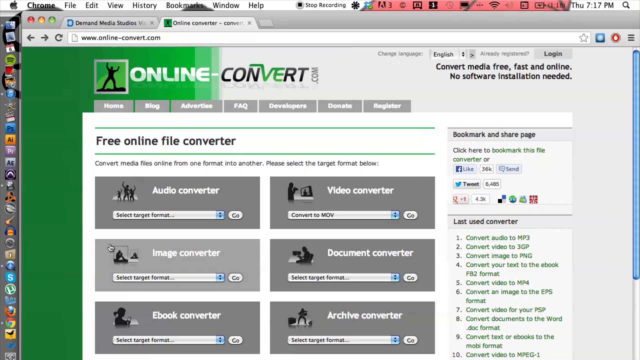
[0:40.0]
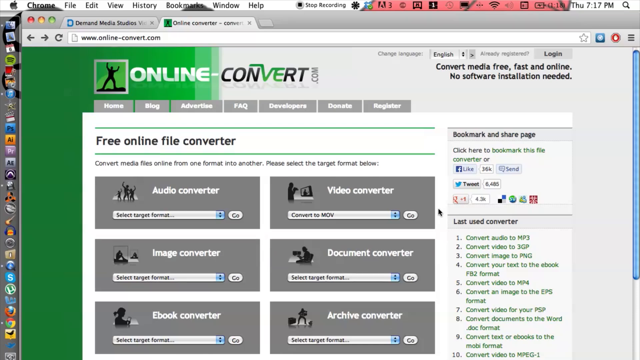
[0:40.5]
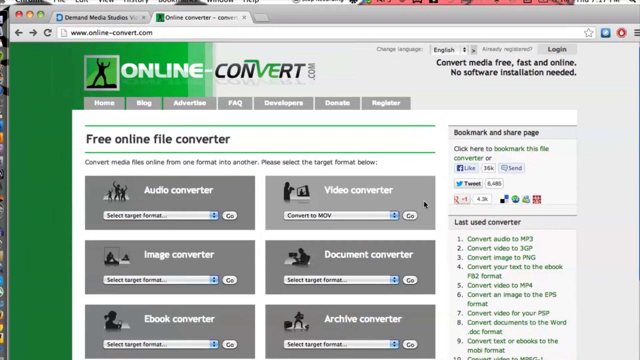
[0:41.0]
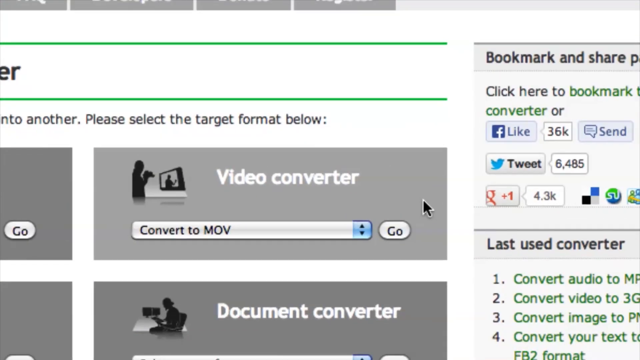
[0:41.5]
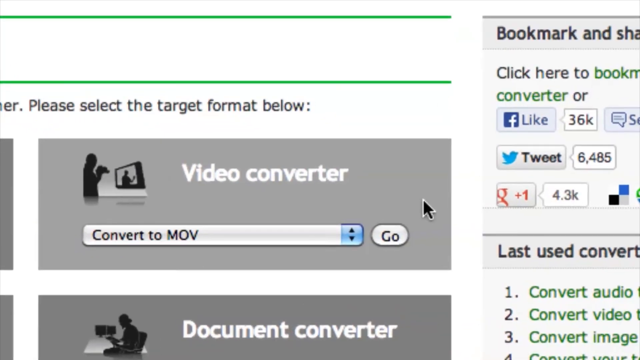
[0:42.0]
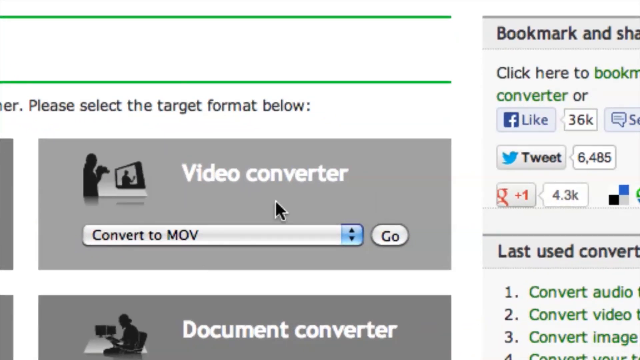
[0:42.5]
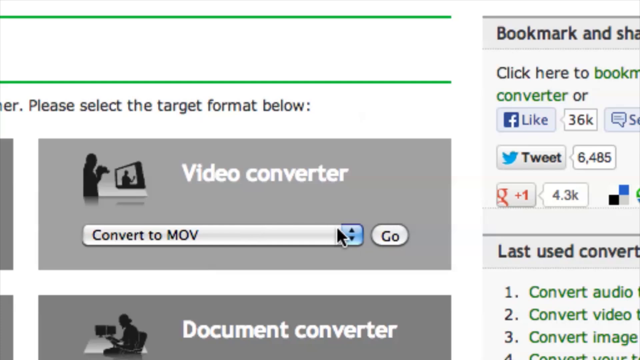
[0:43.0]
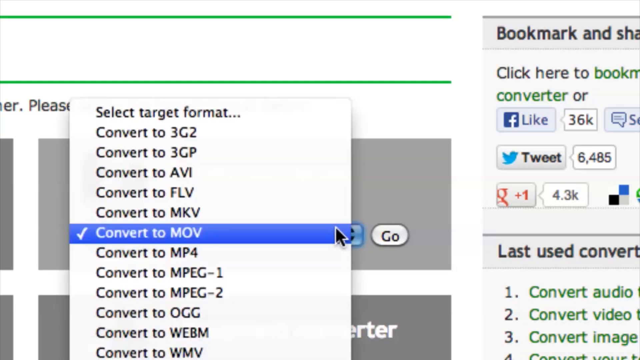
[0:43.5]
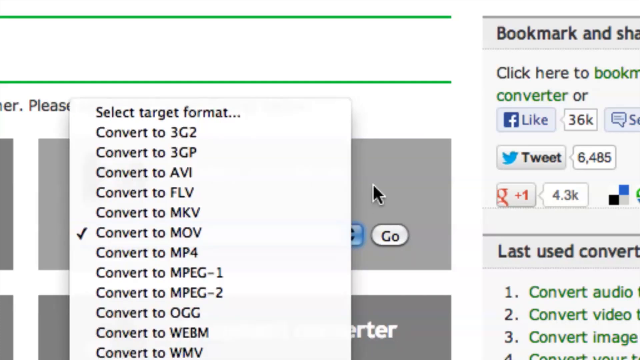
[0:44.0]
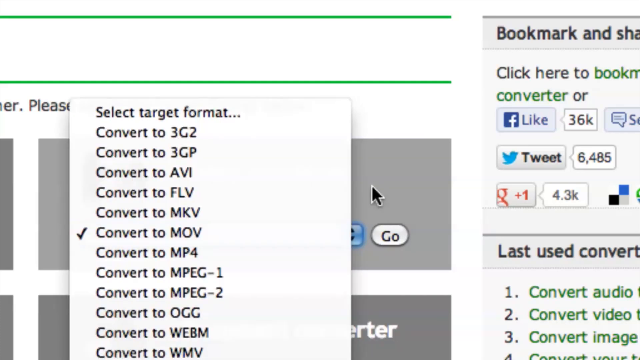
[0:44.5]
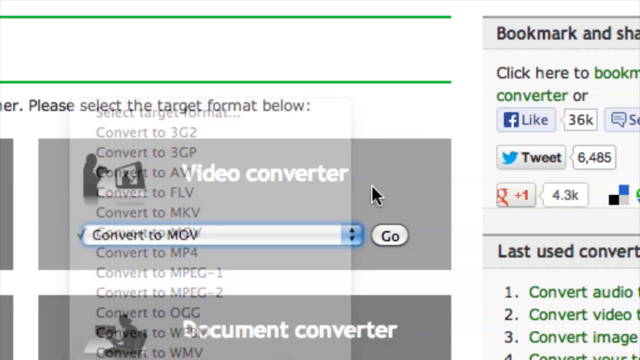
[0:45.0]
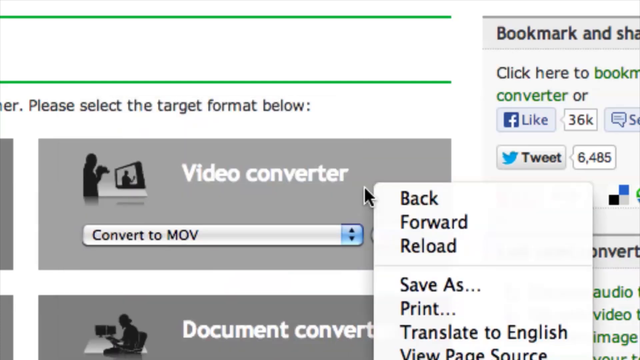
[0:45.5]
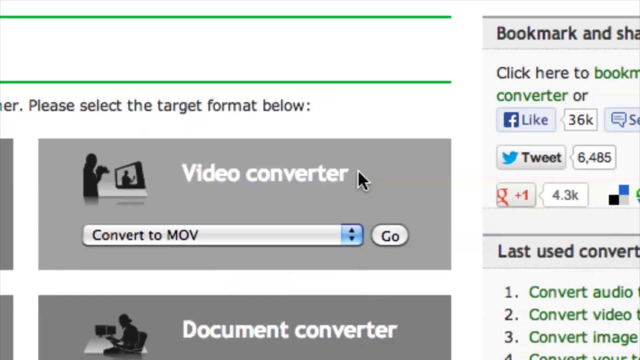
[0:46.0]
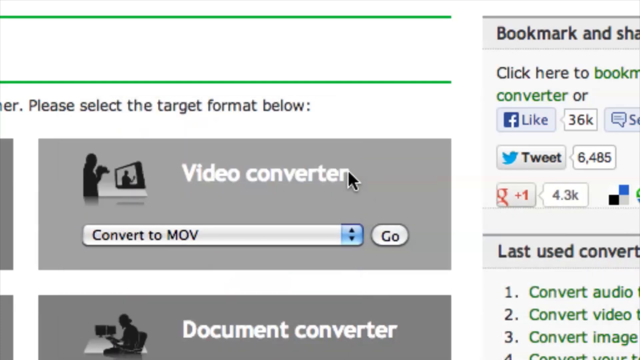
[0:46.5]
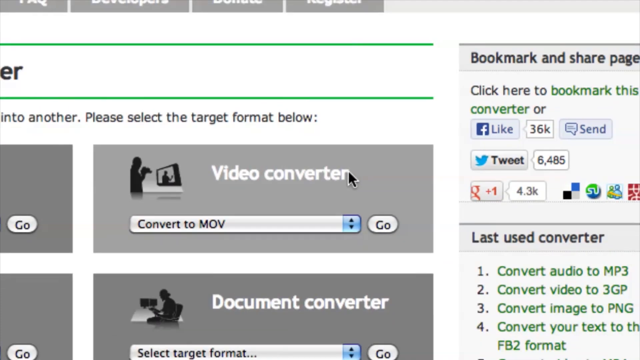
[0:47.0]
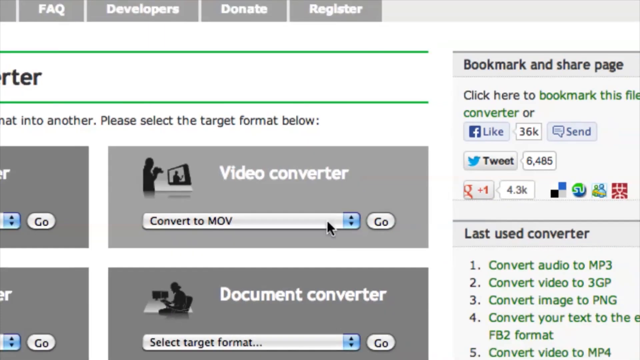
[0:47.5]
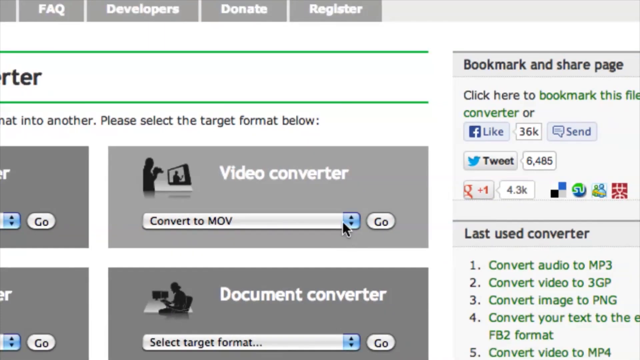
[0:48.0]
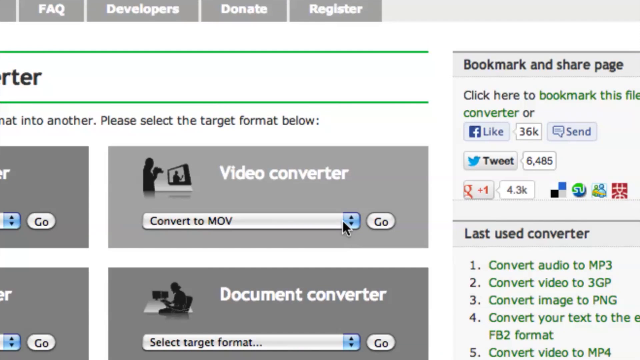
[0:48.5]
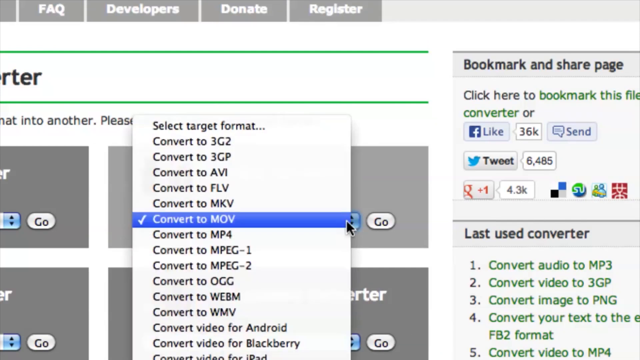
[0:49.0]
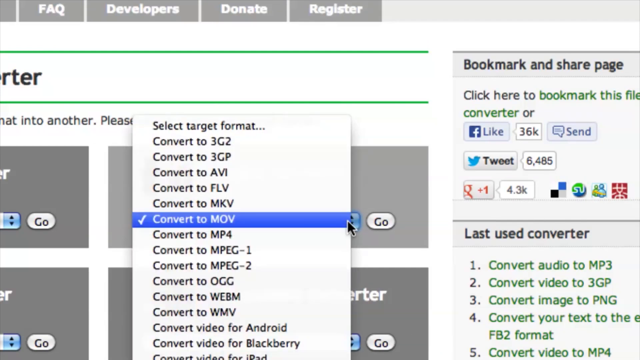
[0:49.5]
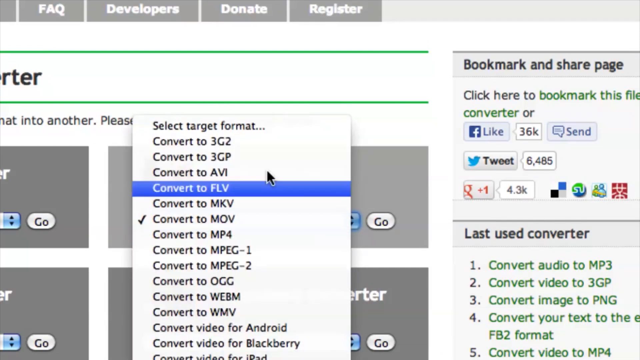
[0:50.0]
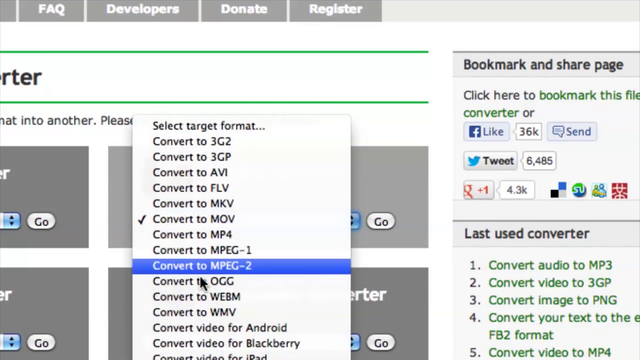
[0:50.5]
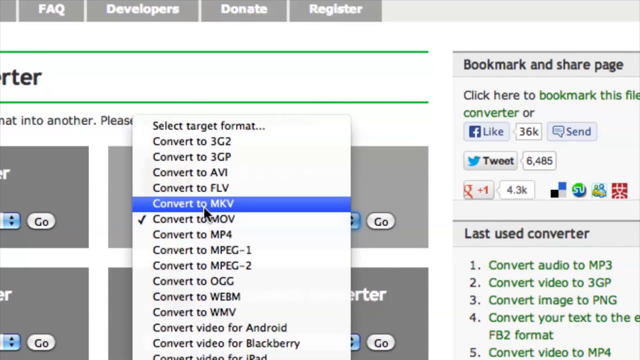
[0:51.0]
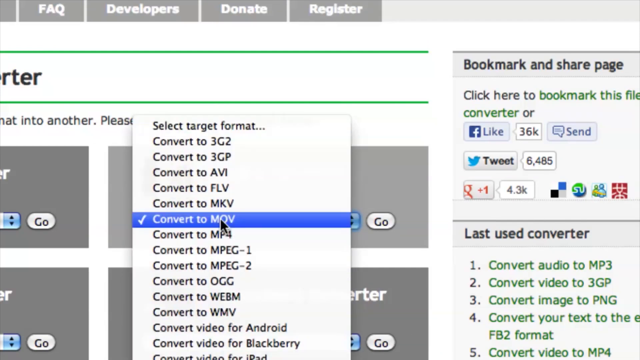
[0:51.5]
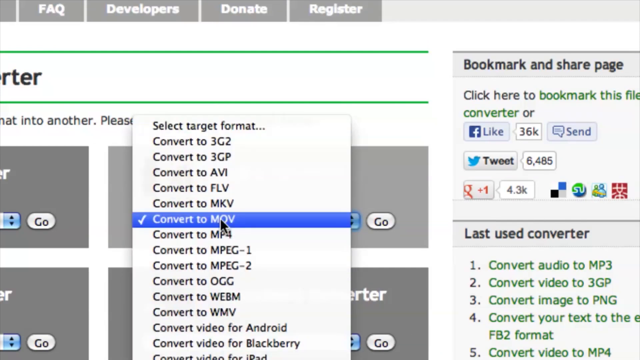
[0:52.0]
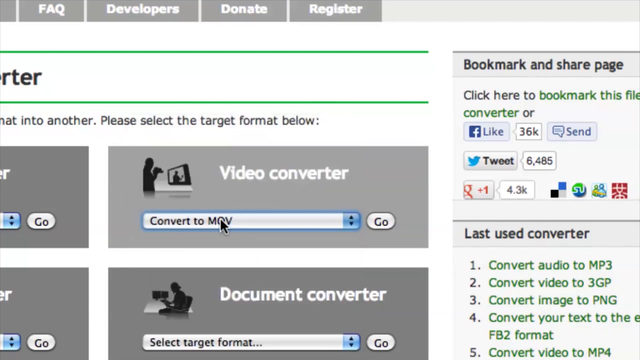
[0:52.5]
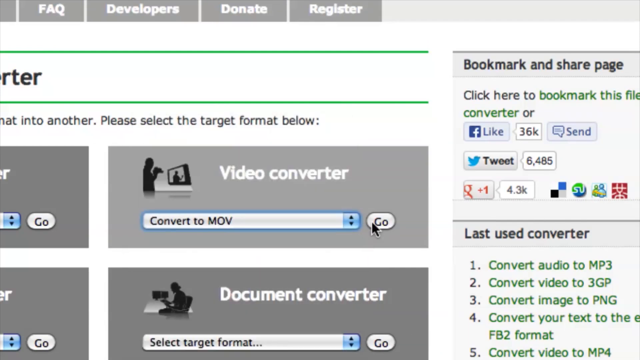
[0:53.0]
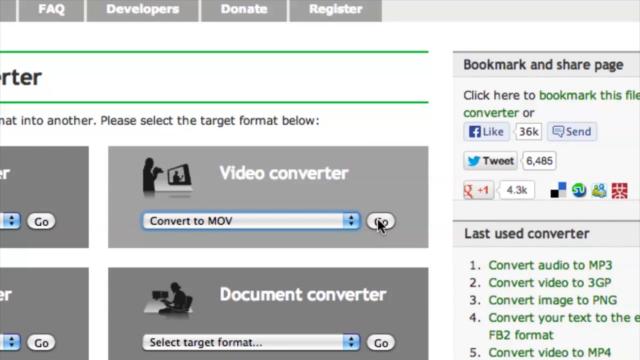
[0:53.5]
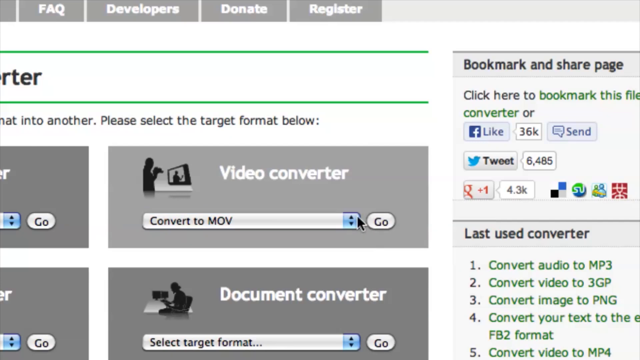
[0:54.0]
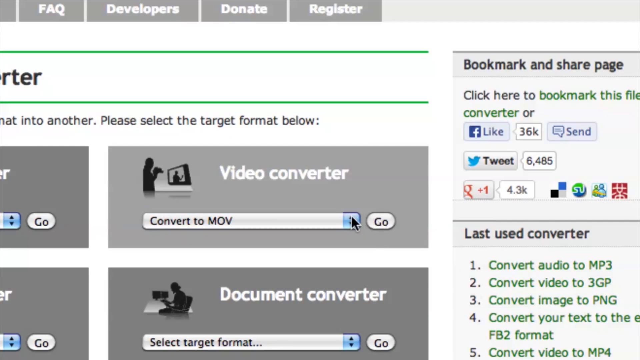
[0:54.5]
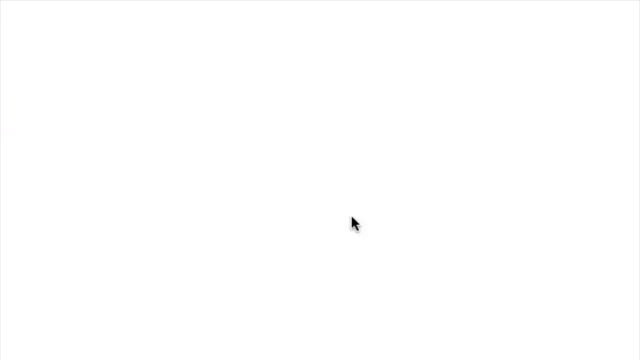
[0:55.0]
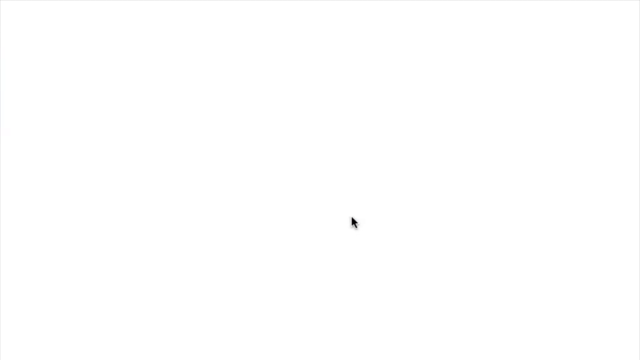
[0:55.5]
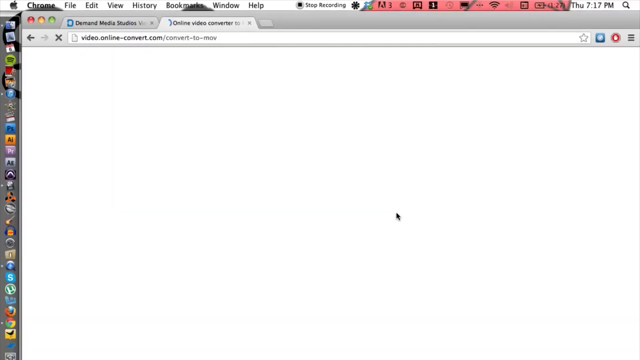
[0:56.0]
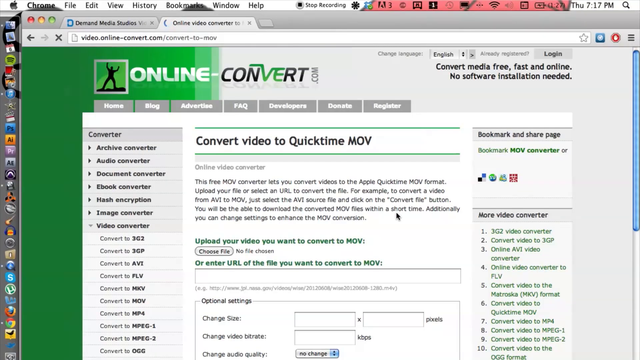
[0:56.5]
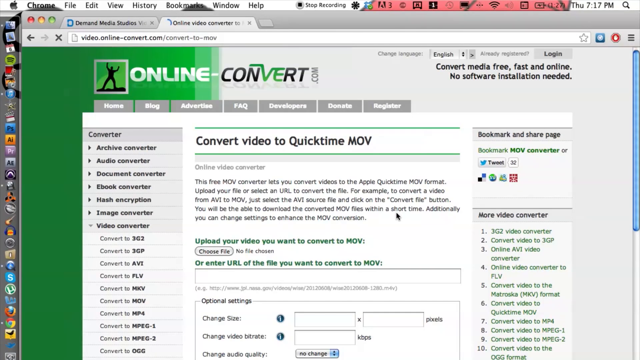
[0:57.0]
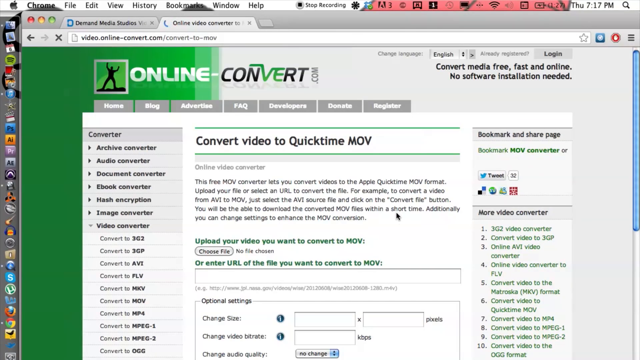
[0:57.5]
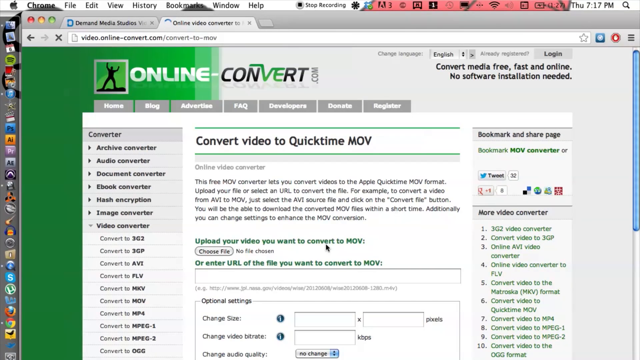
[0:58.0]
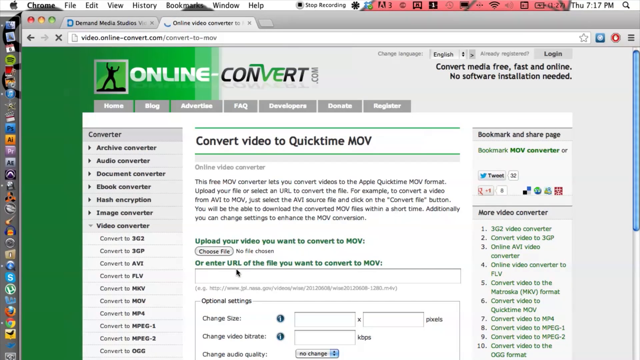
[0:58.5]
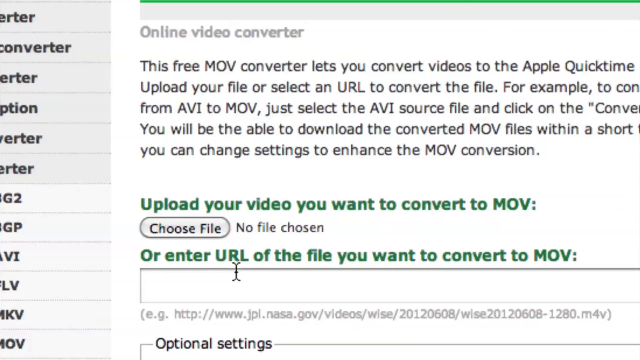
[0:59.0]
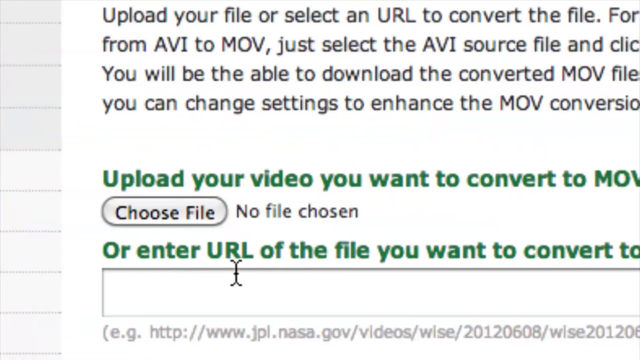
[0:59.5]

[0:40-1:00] The online converter on onlineconvert.com lists conversions to different three-letter file types, one of them being convert to MOV. He clicks the convert to MOV button, and a button reading "choose your file" appears. When he hovers the mouse over that button, it turns from gray to blue. Opening the options reveals a range of formats to convert a file to, such as 3GP.